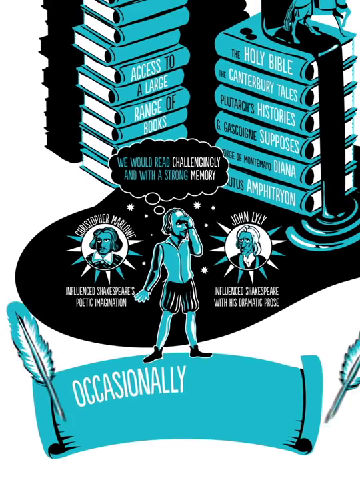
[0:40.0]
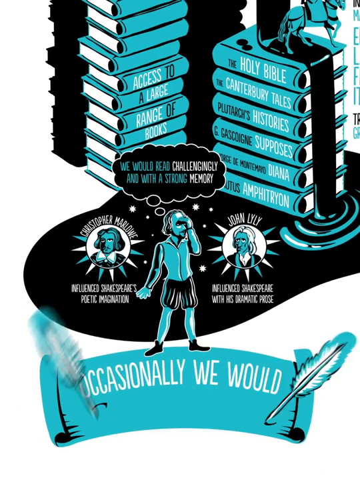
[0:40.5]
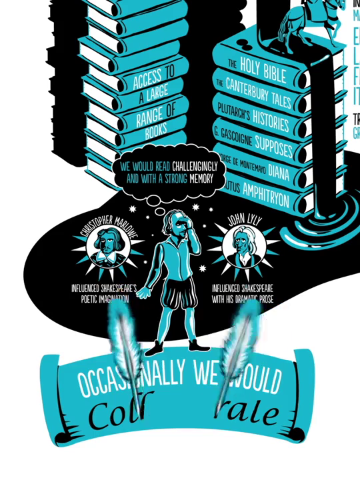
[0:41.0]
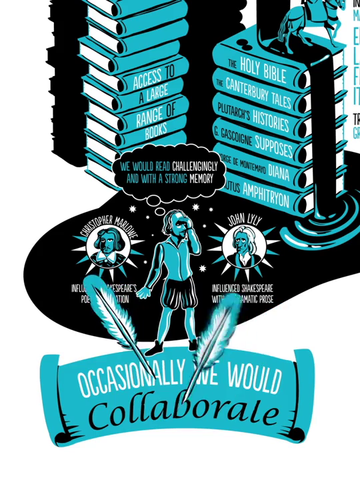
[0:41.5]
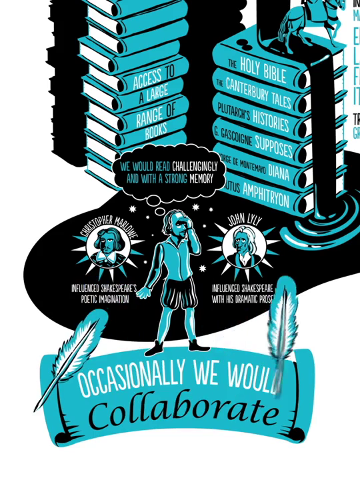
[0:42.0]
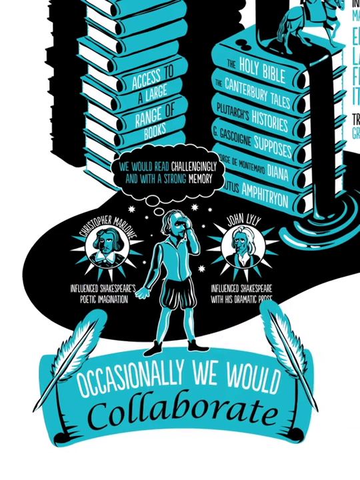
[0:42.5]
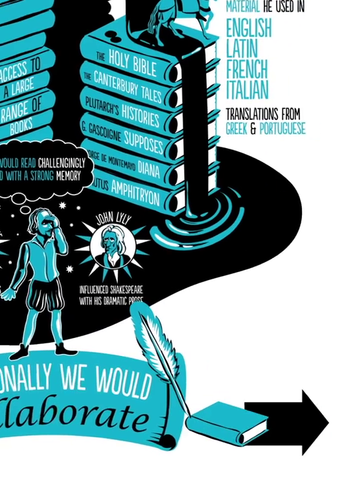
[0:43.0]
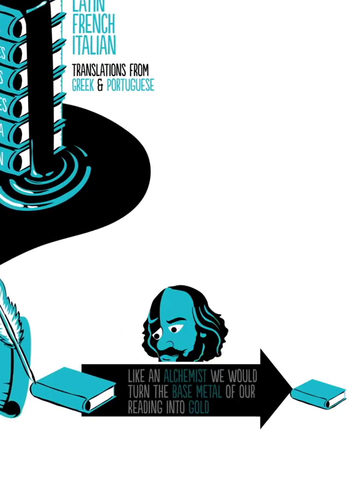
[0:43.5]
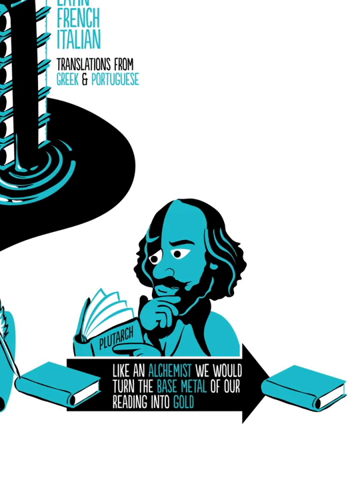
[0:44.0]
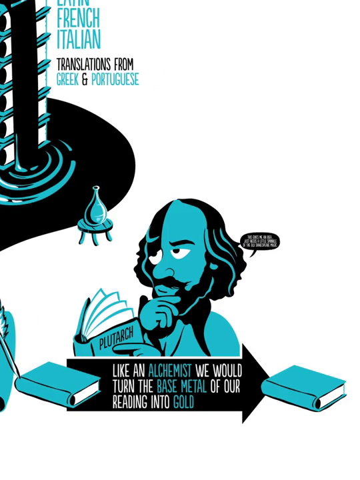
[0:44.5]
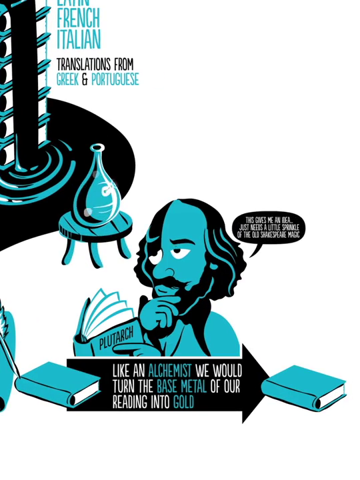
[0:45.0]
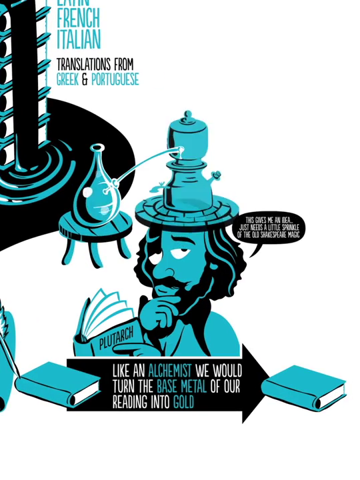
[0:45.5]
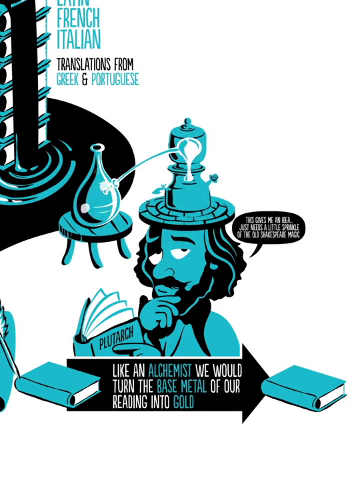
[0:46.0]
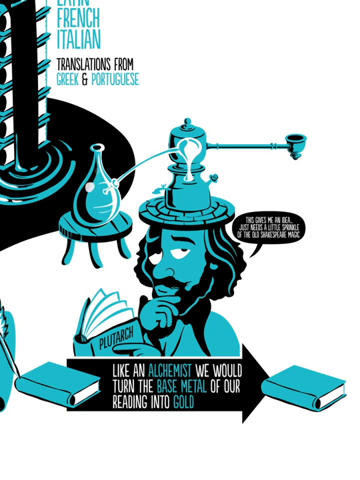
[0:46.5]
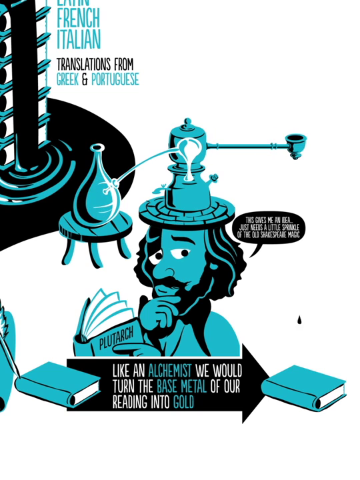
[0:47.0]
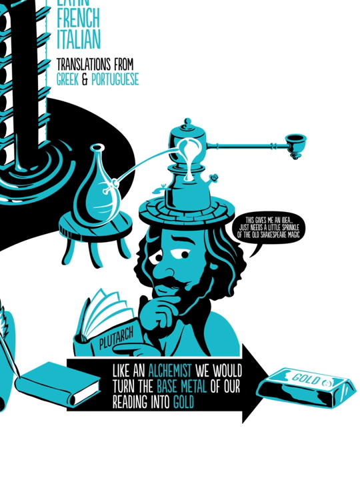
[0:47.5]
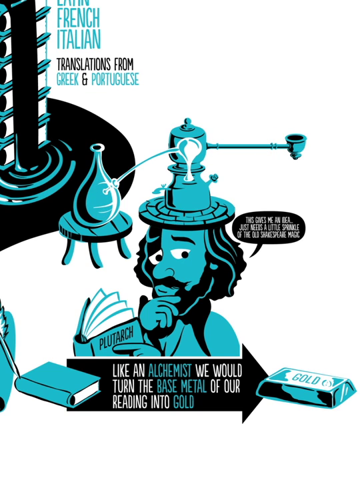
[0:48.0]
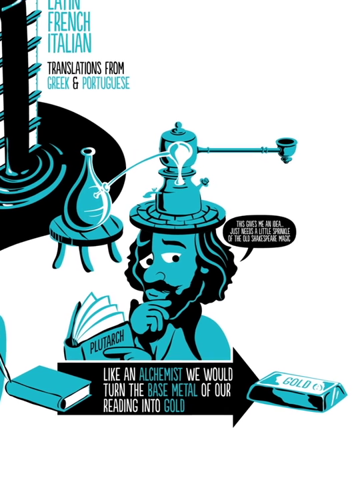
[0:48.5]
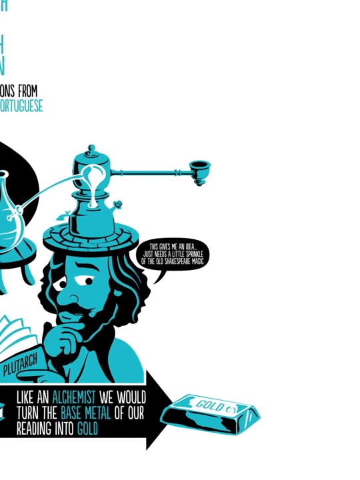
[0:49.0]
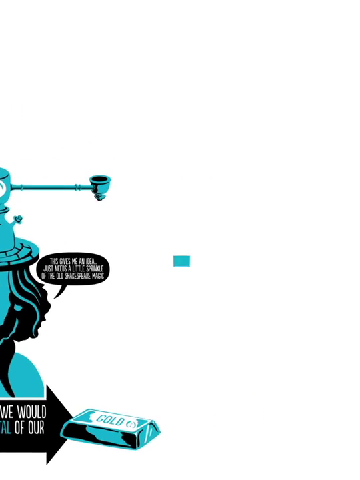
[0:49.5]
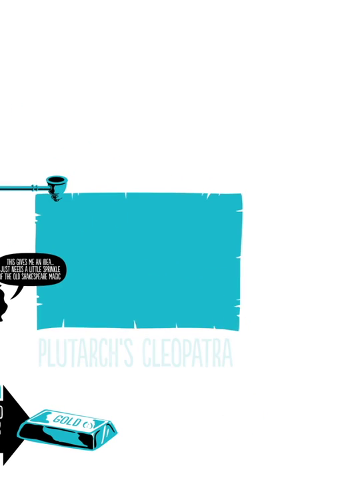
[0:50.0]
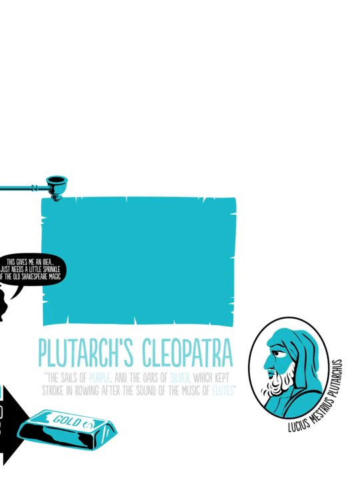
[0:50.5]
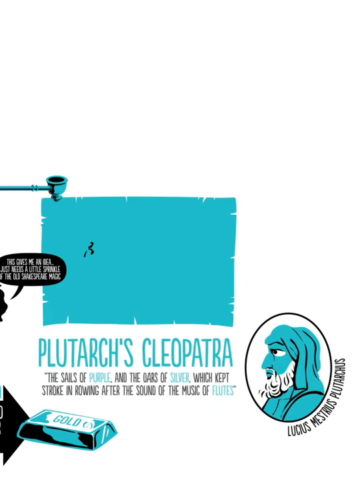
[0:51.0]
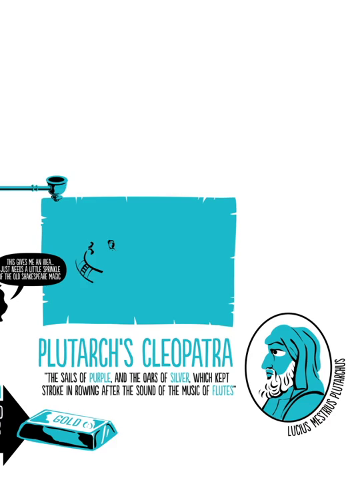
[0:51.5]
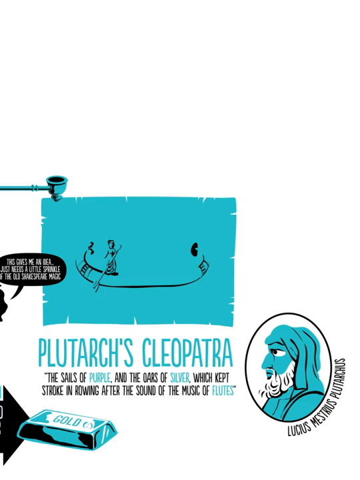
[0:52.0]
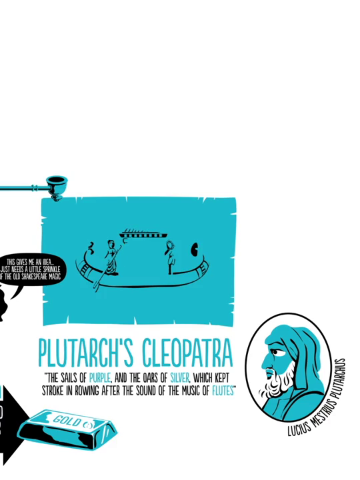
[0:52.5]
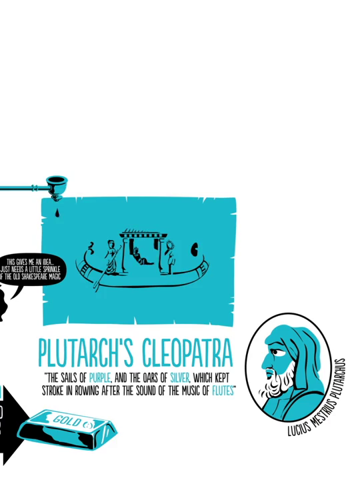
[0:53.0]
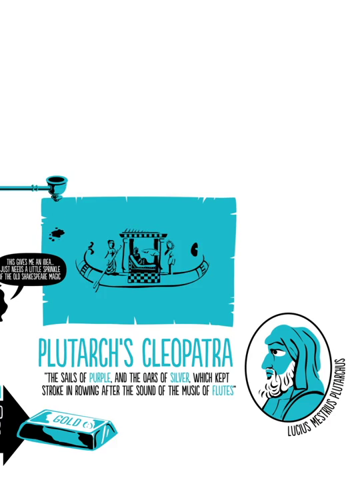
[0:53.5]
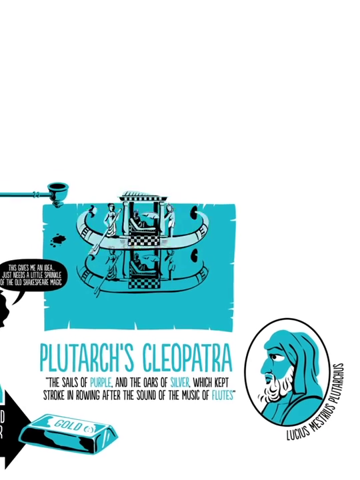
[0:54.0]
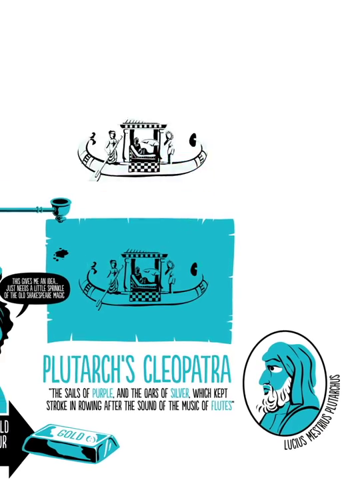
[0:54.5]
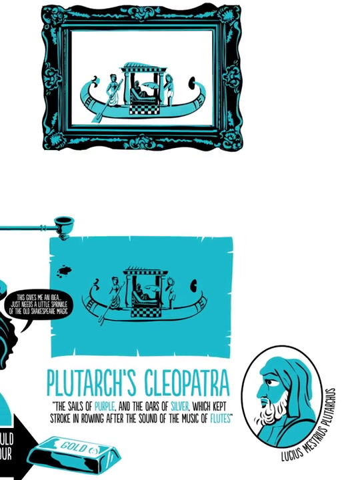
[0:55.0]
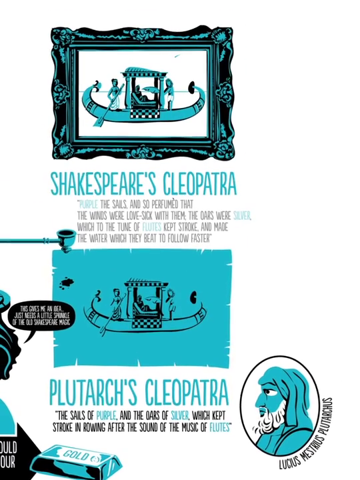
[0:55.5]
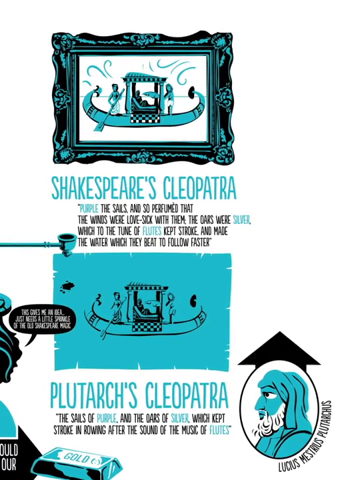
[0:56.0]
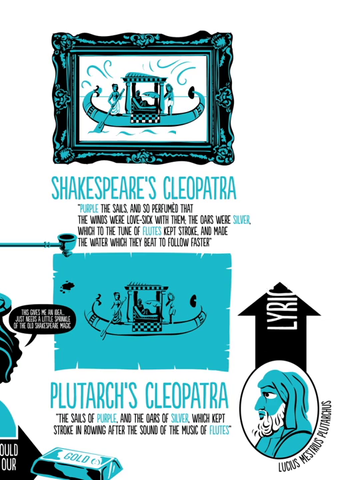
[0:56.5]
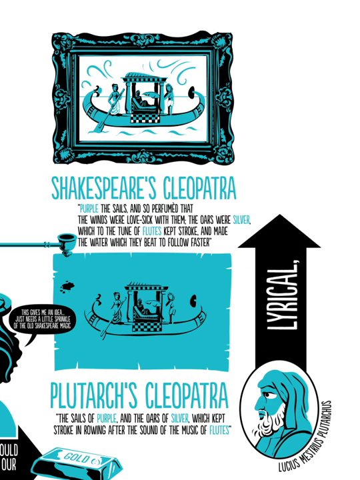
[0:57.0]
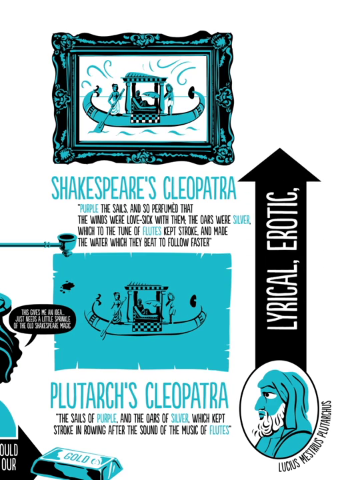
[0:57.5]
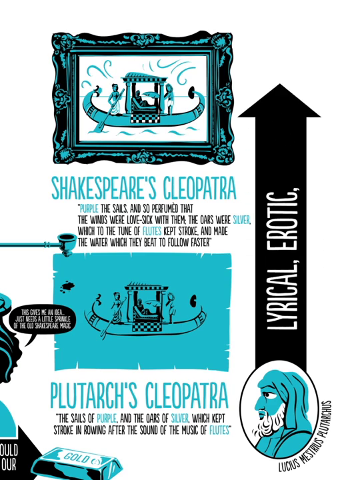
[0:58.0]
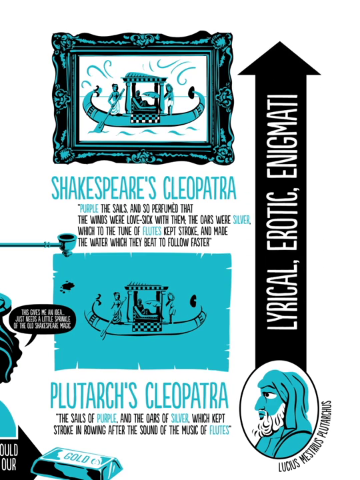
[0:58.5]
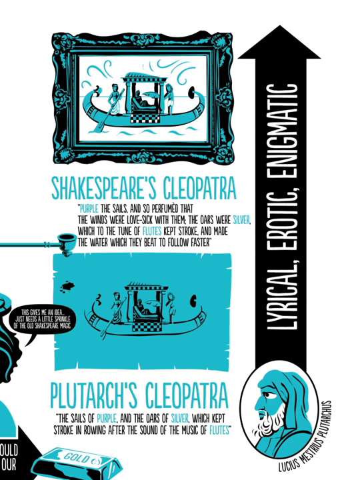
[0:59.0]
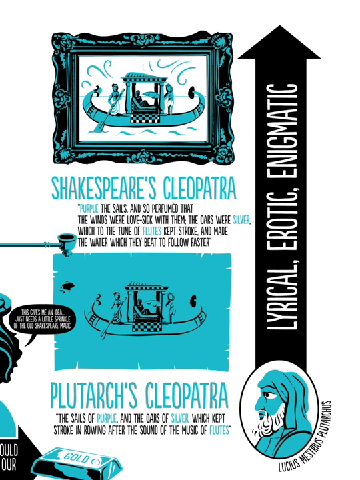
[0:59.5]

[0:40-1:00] Everything is in light blue, black and white. In the background are two stacks of blue books surrounded by a puddle of ink. In front of the puddle is a stationary blue cartoon image of Shakespeare with a thought bubble above his head. In the ink puddle are two portraits, one to the left of the man and one to the right. Under Shakespeare is a blue banner rolled out like a scroll, reading "occasionally we would". Two quills write toward the center from each side, forming the word "collaborate". A black arrow then moves from the scroll banner toward the right as the view pans so that the banner is no longer on screen. Above the arrow appears a stationary image of a man reading a book with his left hand on his chin, as though he is thinking. Behind him and to the left is a beaker on a stool, which begins to bubble and boil. A line then moves from it to show a tea kettle, with an arm extending from the kettle that drips onto a gold bar beneath. A blue rectangle appears next, and the camera pans further right to show it. On the blue rectangle, a boat appears as if it is being drawn, though no hand is shown drawing it. The image of the boat lifts up and off the paper and floats up into a square as if it is a picture. Then an arrow on the far side slowly grows up toward the top of the screen.